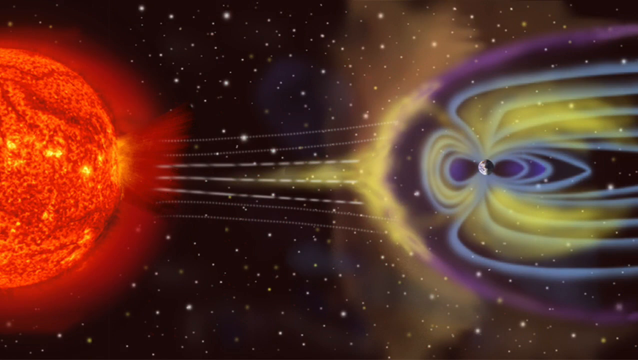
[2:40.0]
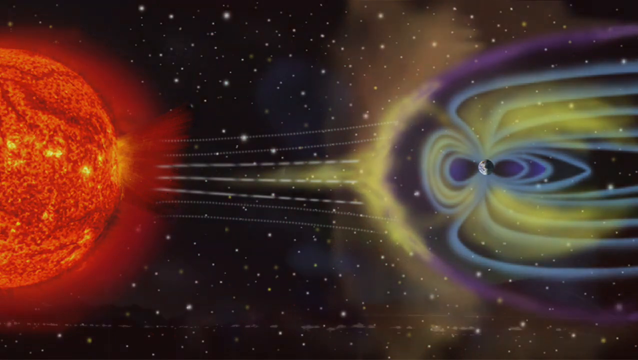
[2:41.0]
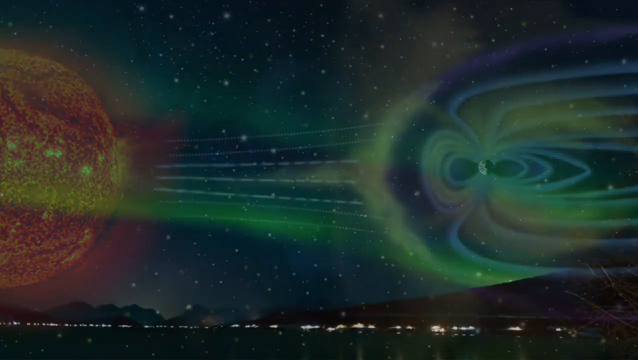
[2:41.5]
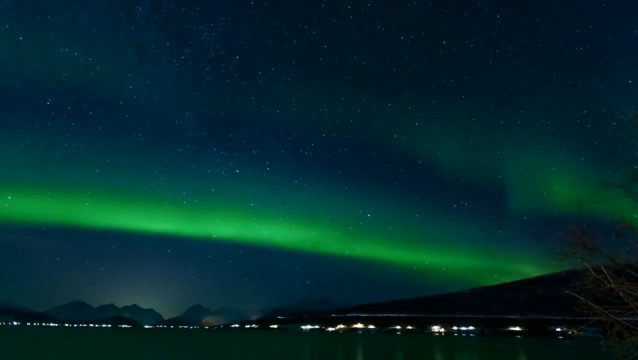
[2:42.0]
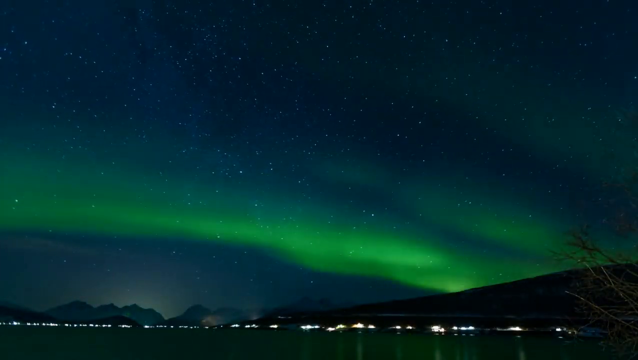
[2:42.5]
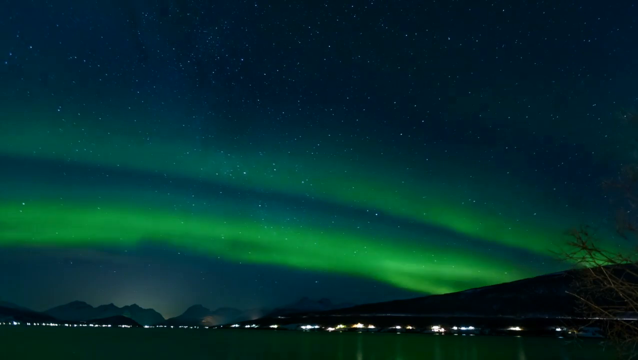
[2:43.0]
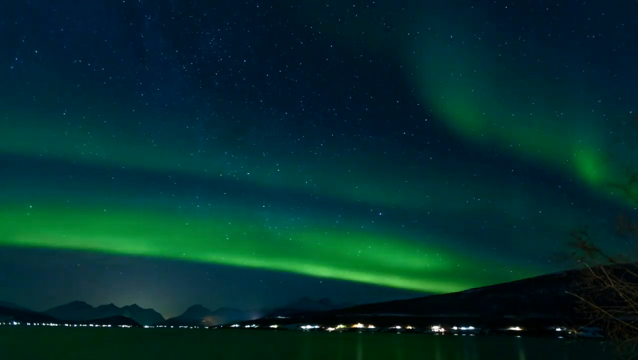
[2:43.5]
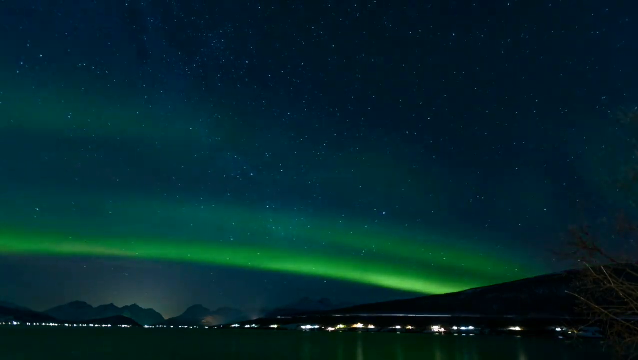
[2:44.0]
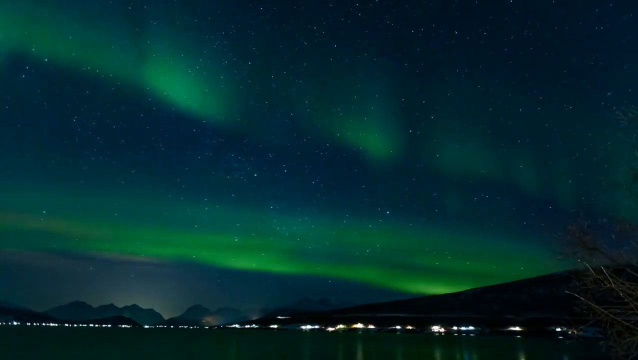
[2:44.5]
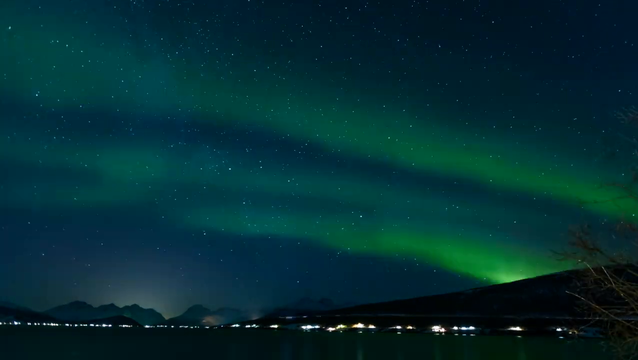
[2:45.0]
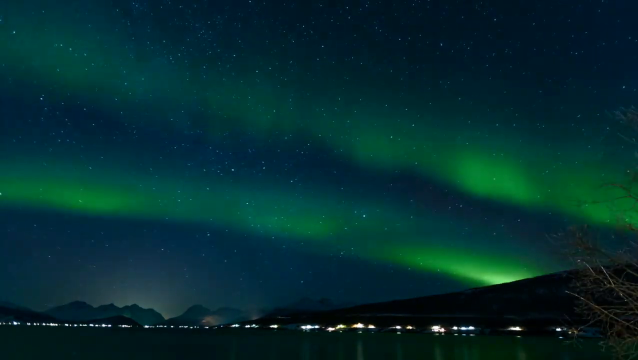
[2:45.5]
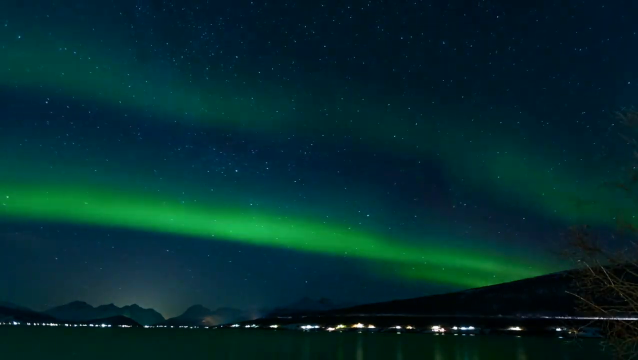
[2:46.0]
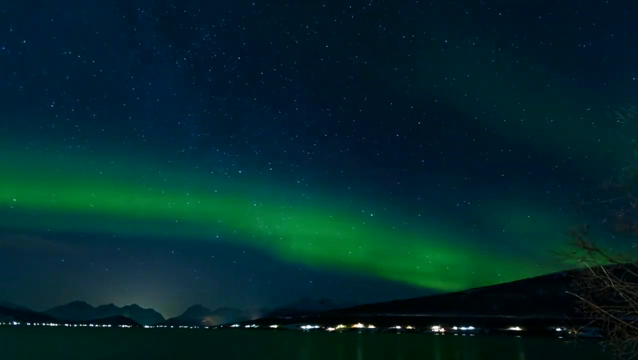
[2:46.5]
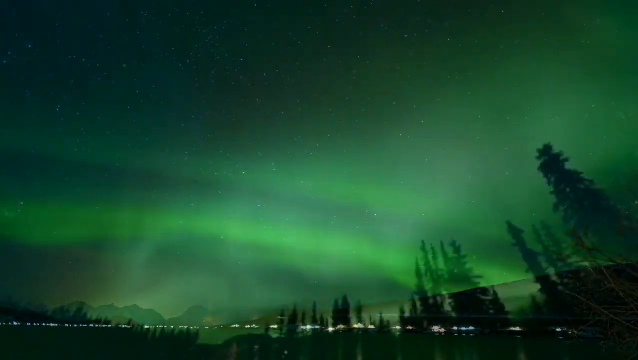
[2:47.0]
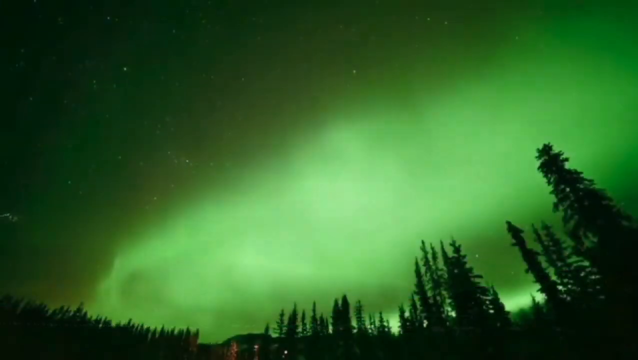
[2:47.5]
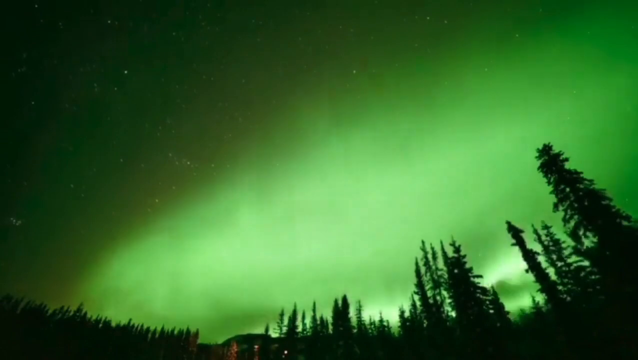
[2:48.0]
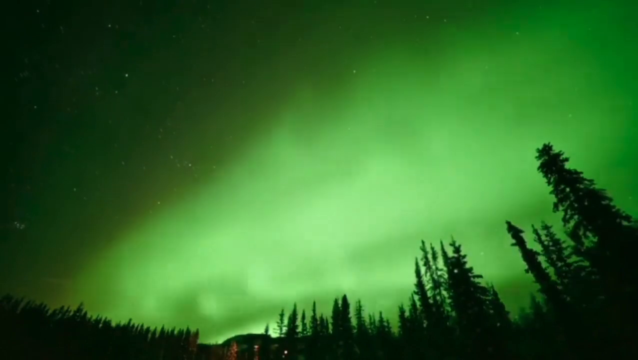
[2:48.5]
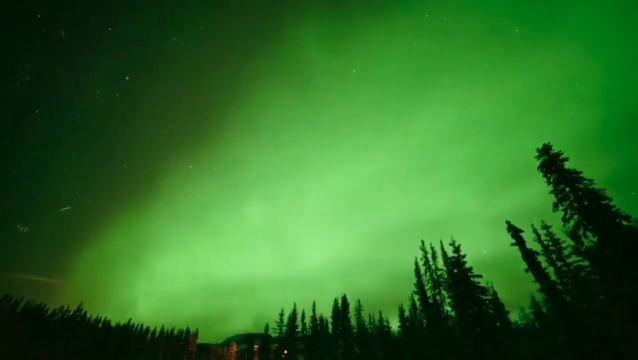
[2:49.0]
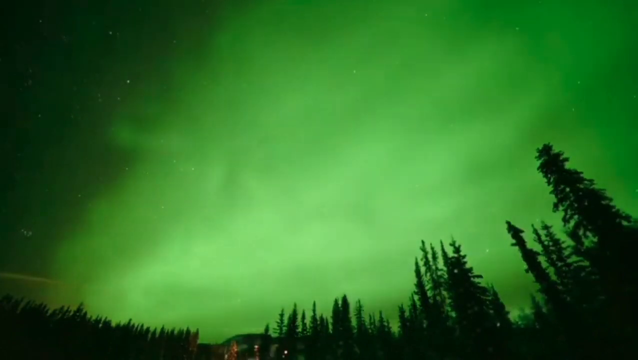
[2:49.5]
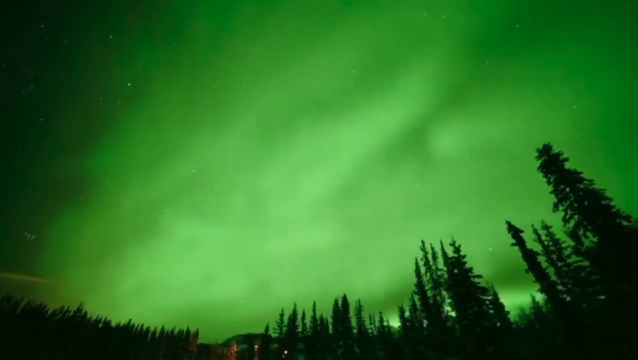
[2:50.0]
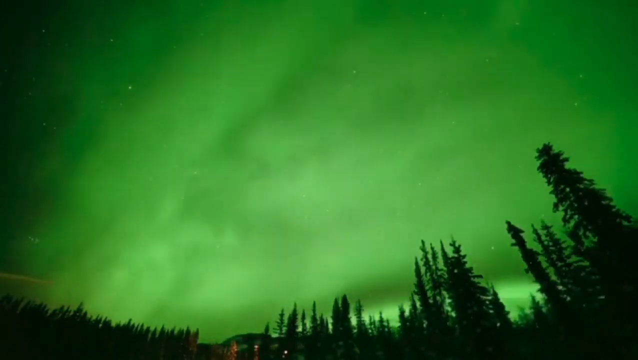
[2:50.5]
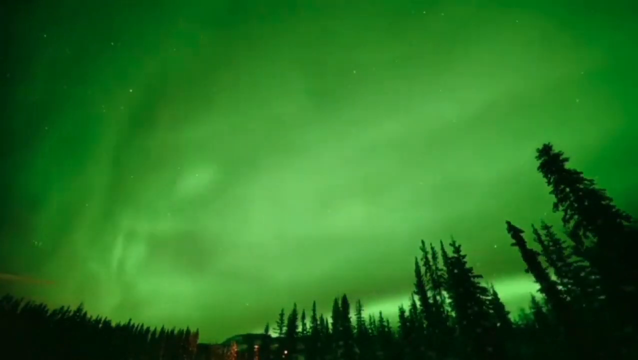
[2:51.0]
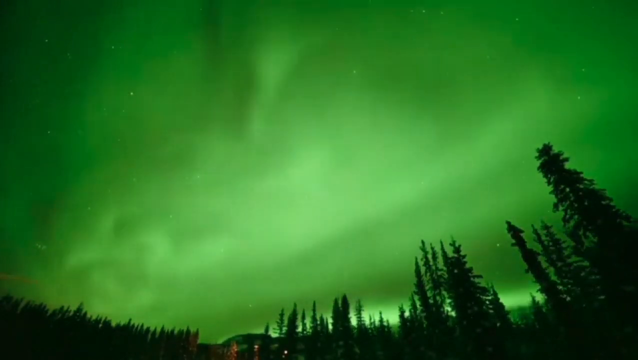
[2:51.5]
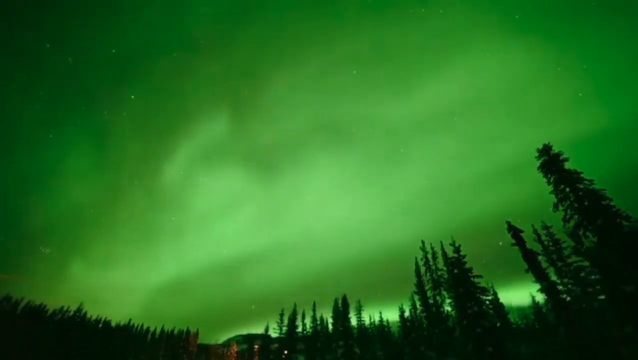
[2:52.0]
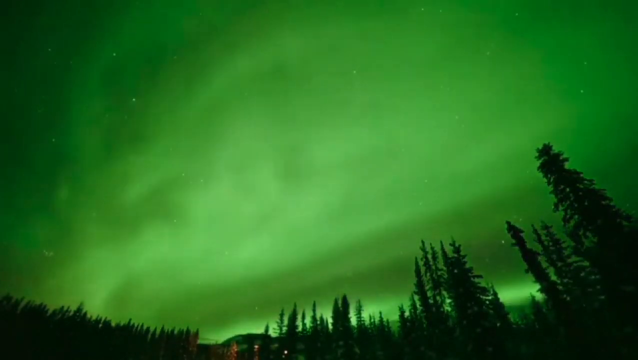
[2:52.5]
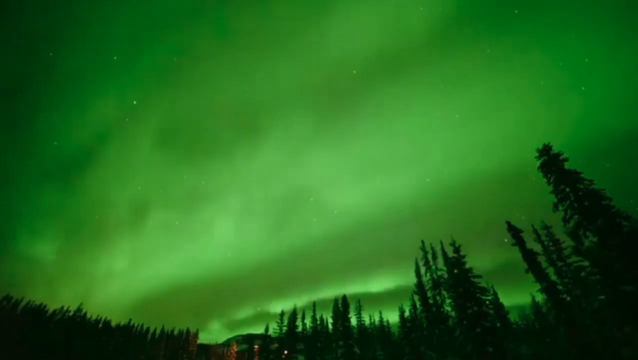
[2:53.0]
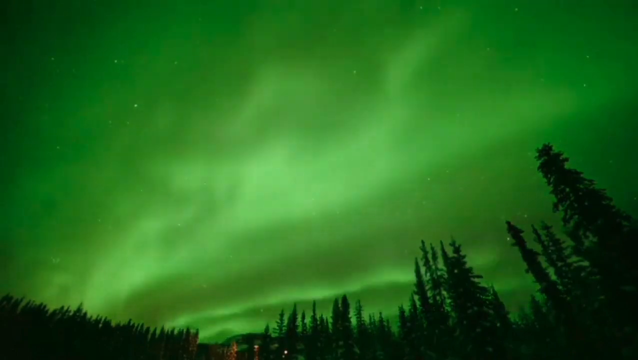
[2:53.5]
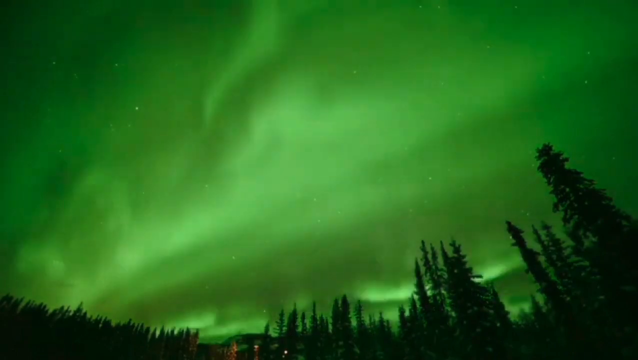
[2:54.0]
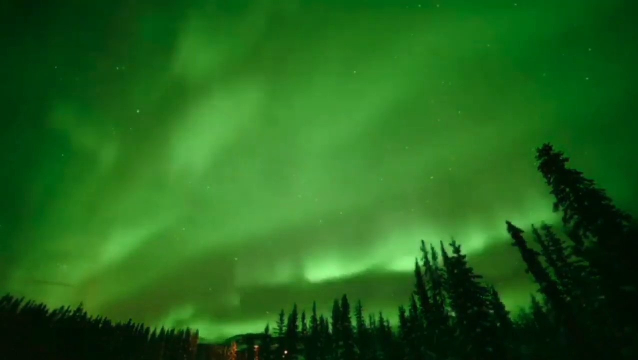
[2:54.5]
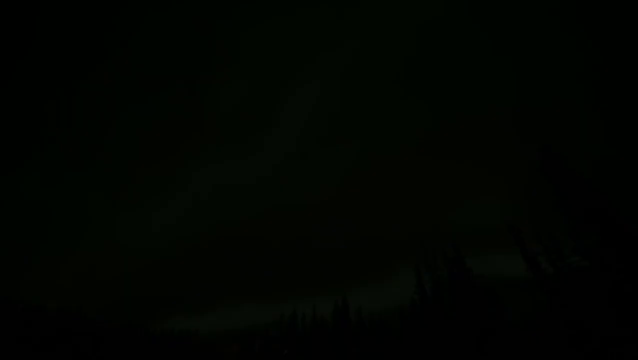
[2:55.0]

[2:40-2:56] Green lights mixed with purple and red look like moving curtains or waves that keep changing shape, slowly dancing across the dark sky. The aurora moves, and the sky seems to have waves, with stars visible behind the green waves. The camera seems to be set on the ground, so part of the Earth is visible, with a few tree branches on the right side of the frame; more trees come into the frame as the shot continues. The aurora seems to be touching the Earth.